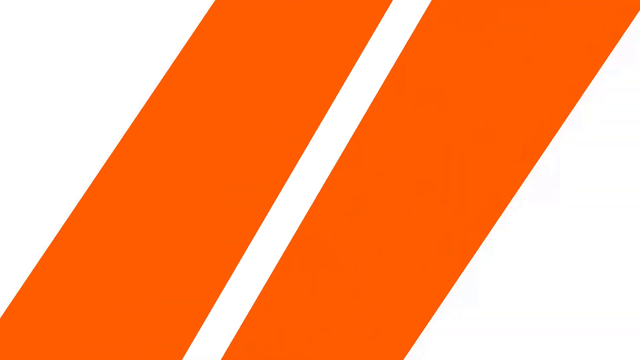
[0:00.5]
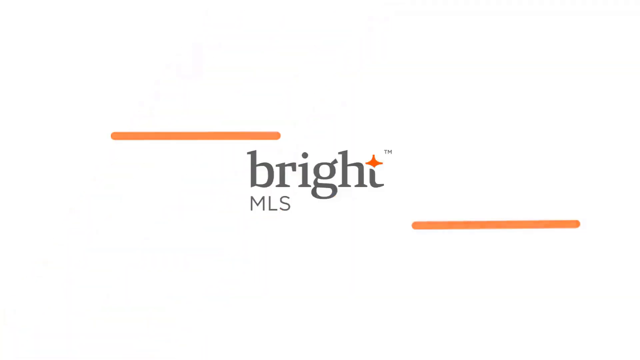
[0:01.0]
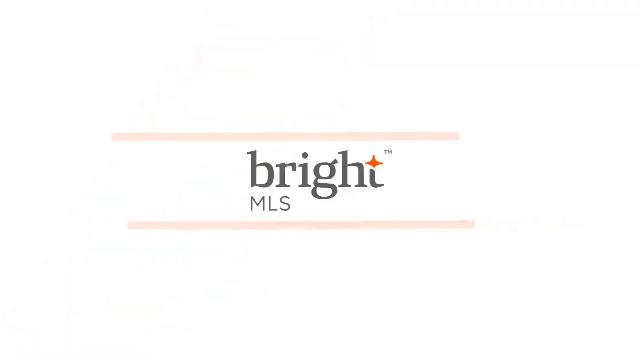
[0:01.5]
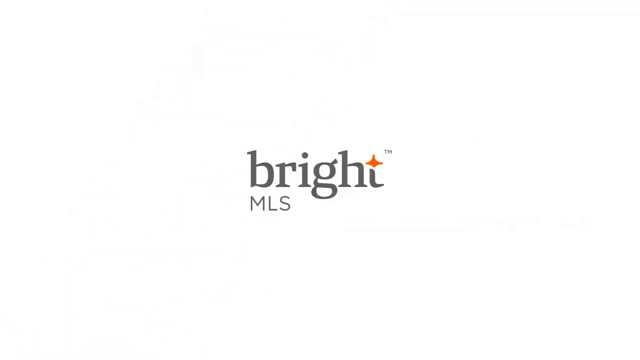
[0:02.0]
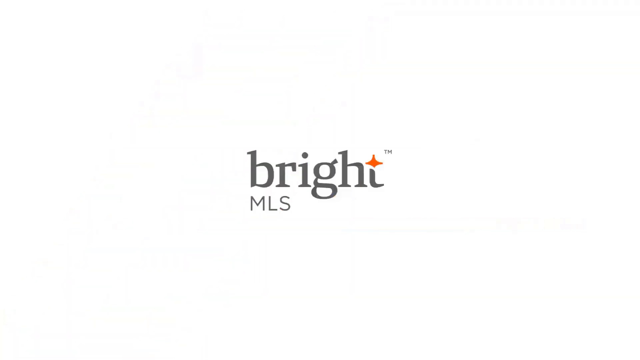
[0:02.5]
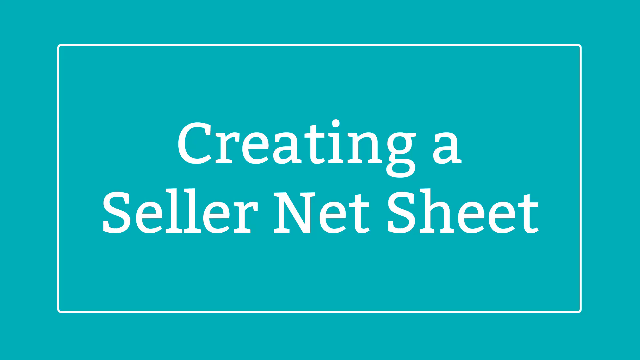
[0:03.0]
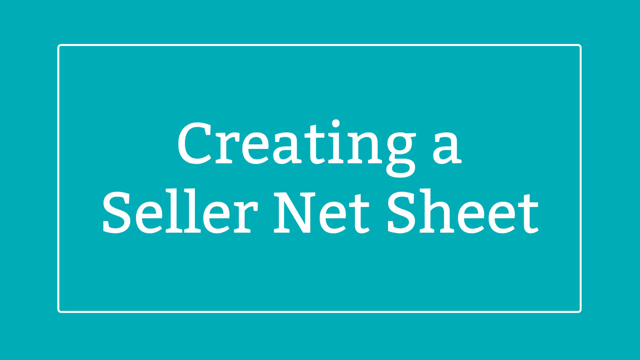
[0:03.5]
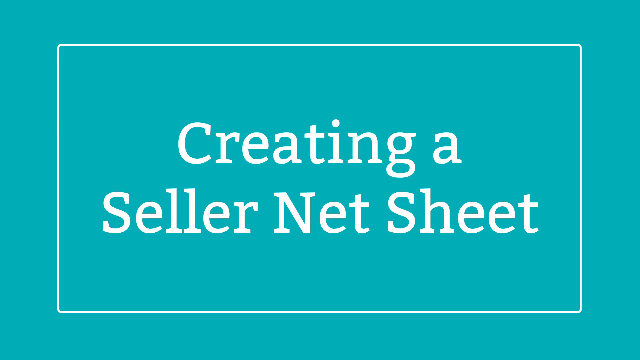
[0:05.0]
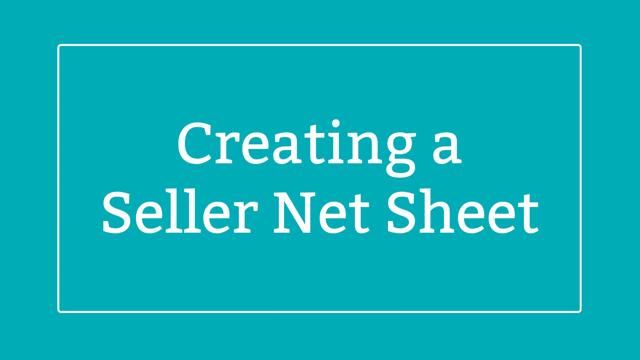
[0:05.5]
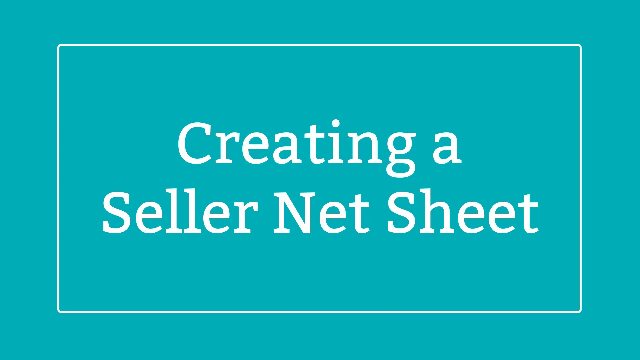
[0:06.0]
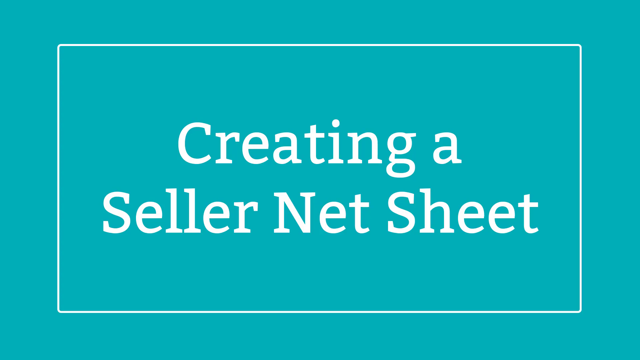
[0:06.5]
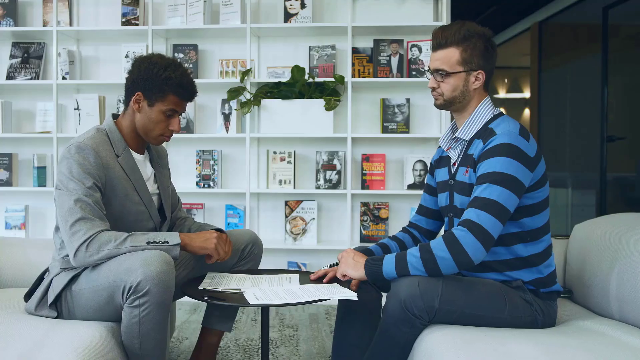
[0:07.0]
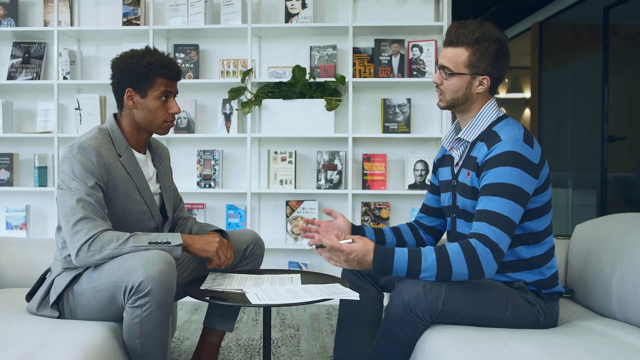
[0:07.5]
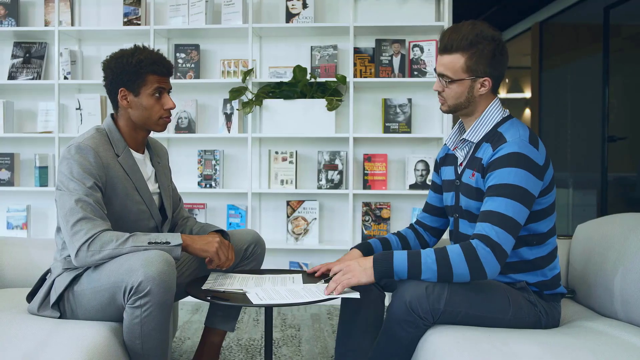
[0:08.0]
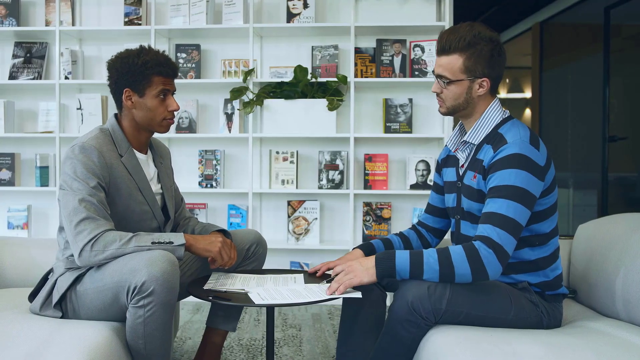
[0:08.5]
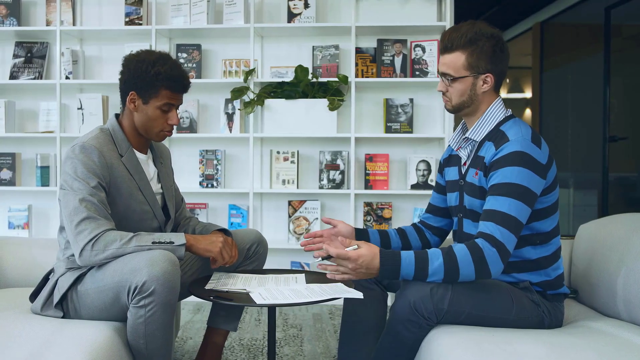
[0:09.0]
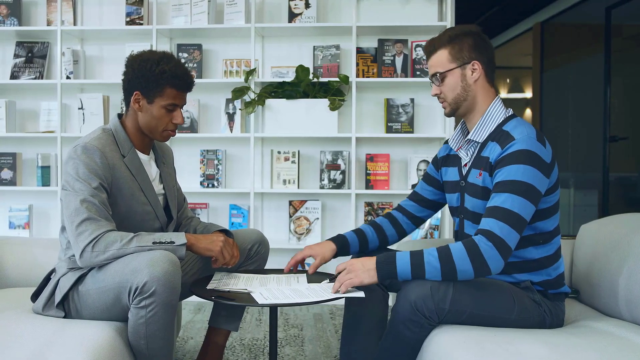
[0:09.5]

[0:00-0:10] The video opens on a plain white screen. A logo fades into the center while two orange stripes quickly cross the screen and fade away. The logo is for a company called Bright MLS: "Bright" is written in a serif font, with an orange shape resembling a starburst over the T at the end, replacing the top of the T, and a tiny "TM" next to this part of the image. Underneath, "MLS" is centered under the B and R of "Bright" in a non-serif font. Next comes a blue screen with a white outline box and white text centered on the screen reading "creating a seller net sheet." The video then cuts to two people sitting across a very small table from each other, with a bookshelf holding lots of books and a potted plant behind them. One man wears a stripy sweater over a button-up collared shirt, and the other wears a gray suit. There is paperwork on the table between them, and the man in the sweater appears to be explaining something to the man in the gray suit.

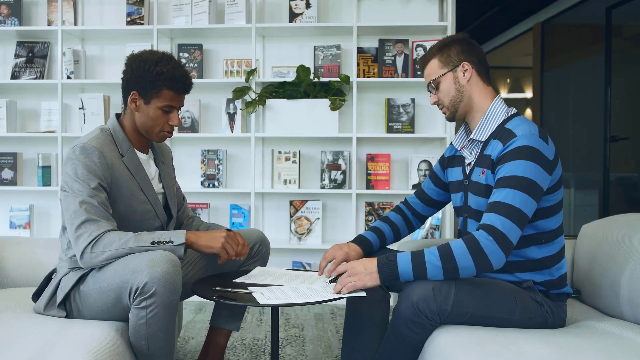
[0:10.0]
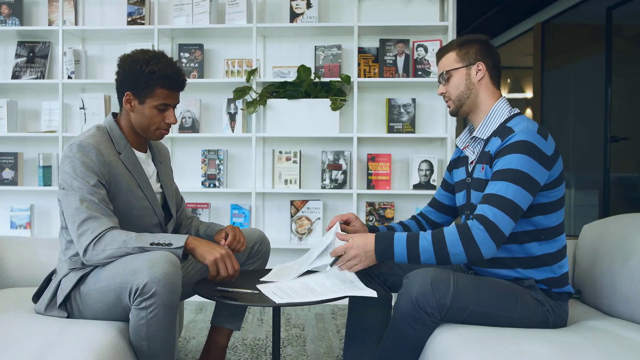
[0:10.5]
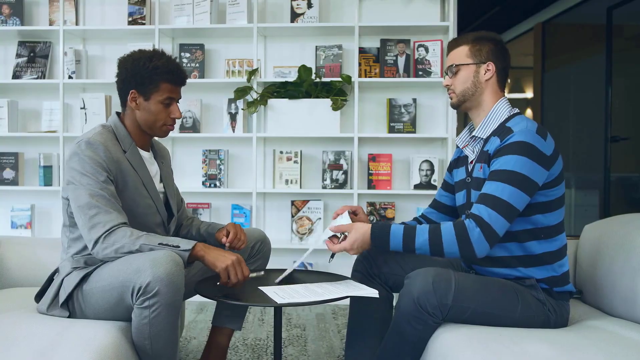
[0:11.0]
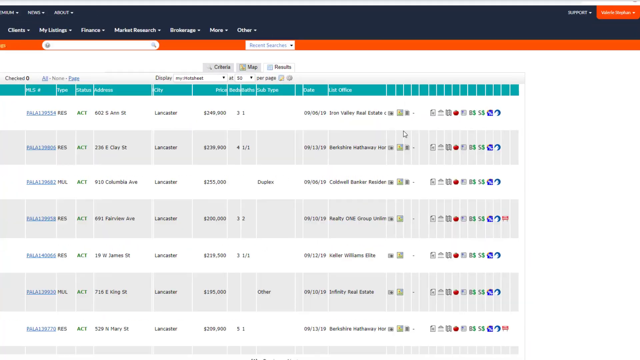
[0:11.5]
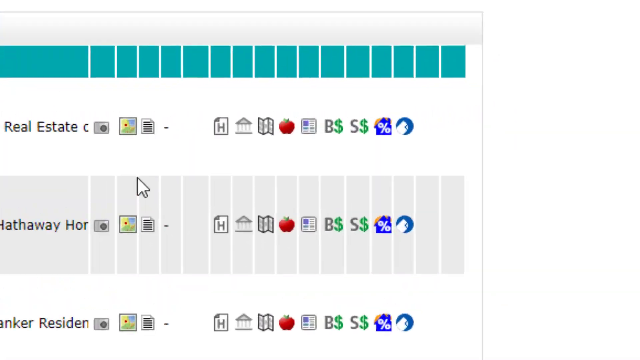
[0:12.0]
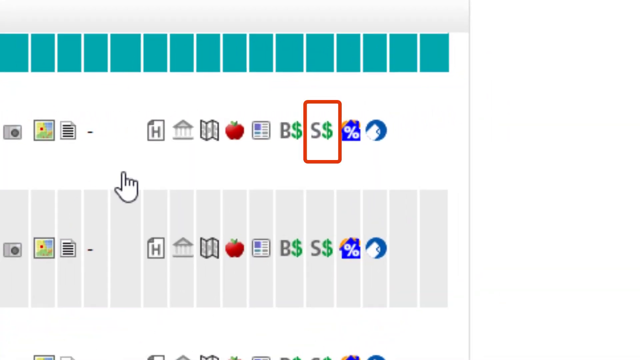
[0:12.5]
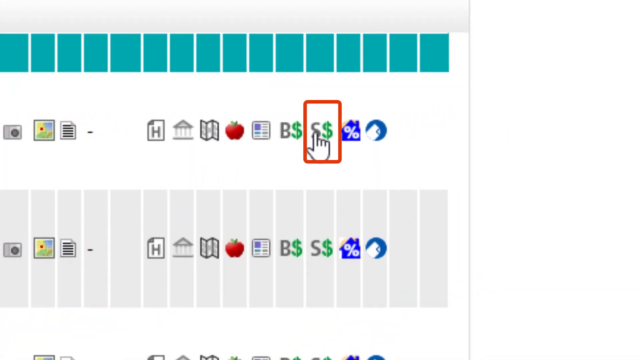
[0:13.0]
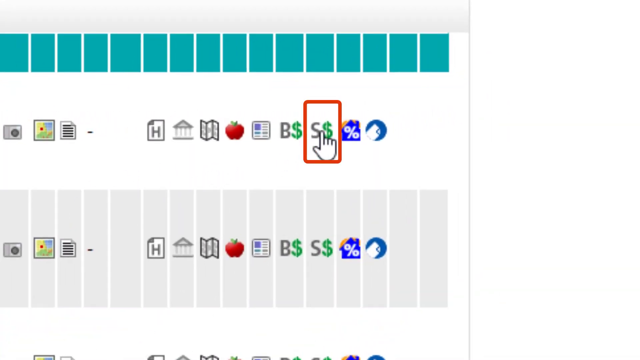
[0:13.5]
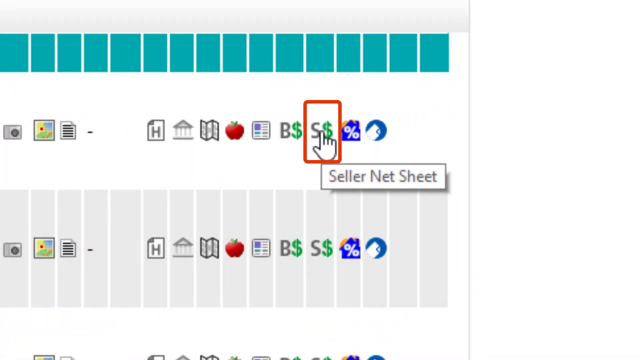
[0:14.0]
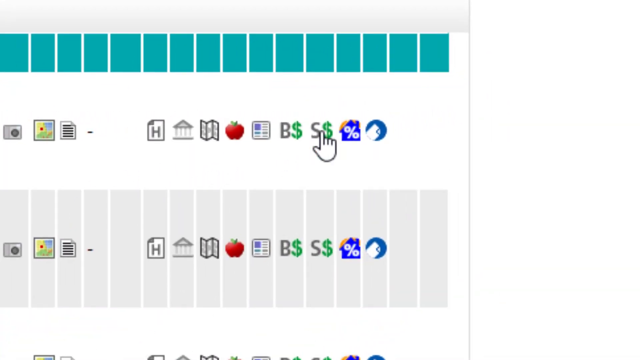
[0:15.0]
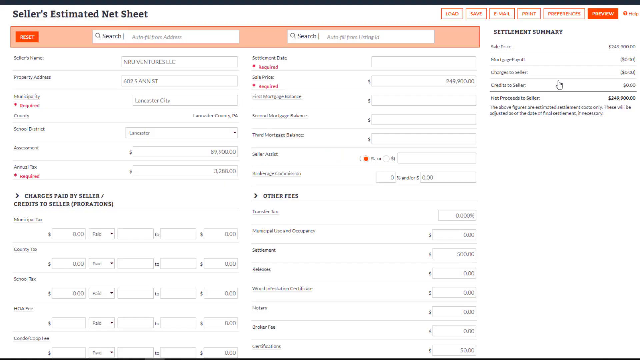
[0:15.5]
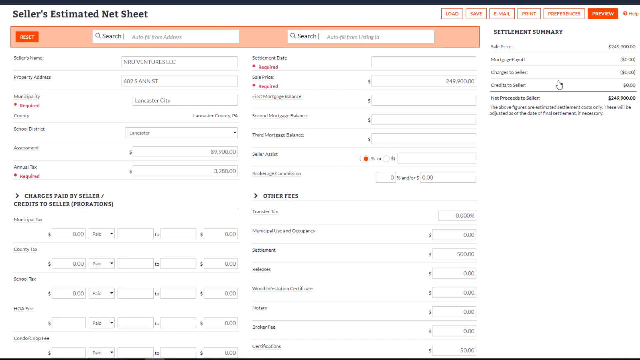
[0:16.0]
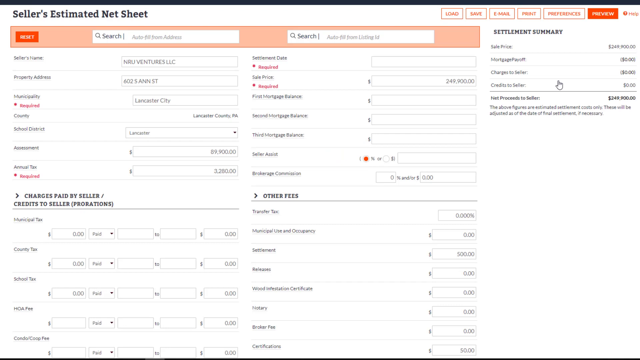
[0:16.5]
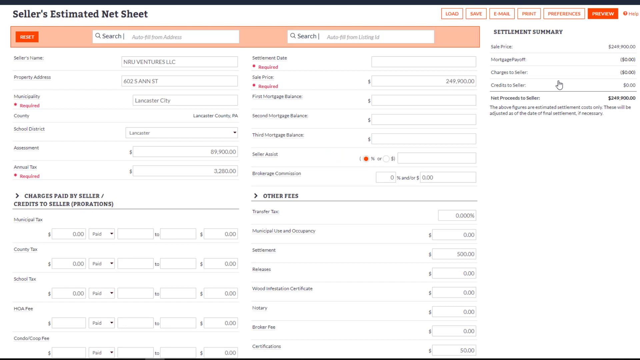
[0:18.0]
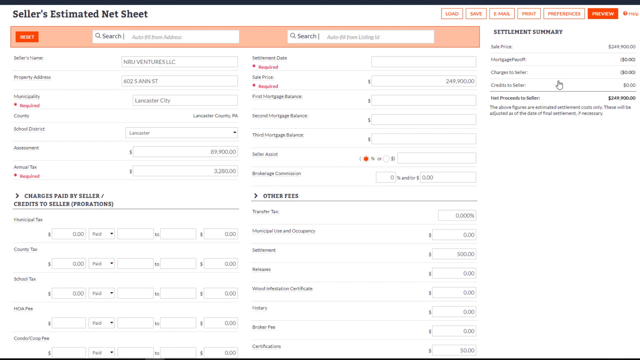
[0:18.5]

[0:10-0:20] Two men sit across from each other at a small table with some paperwork on it. One wears a striped sweater over a striped button-up collared shirt, and the other wears a gray suit over a white shirt. The man in the striped sweater appears to be reviewing the paperwork and discussing it with the other man. He lifts up one piece of paper, and the video cuts to a digital screen. It zooms in on several symbols, one of which, an S followed by a dollar sign, is outlined in a large red rectangle. A mouse cursor moves over to this symbol and clicks it, opening a page titled "Seller's Estimated Net Sheet" with lots and lots of entry boxes. The page design uses a lot of orange for the buttons, the outline and the emphasized text. The view stays on this screen for the rest of the shot.